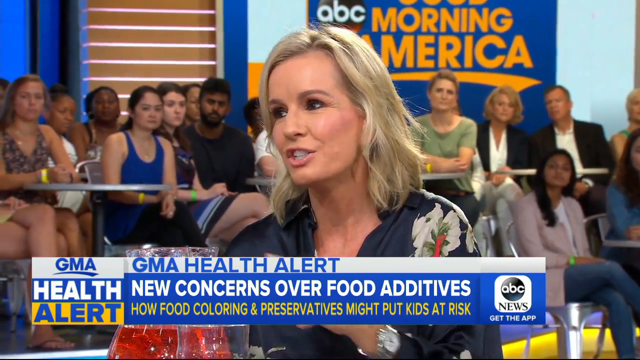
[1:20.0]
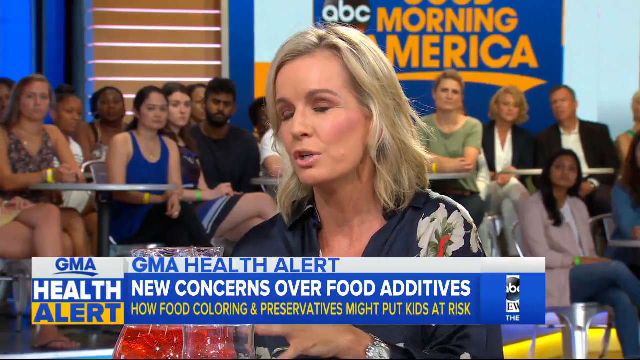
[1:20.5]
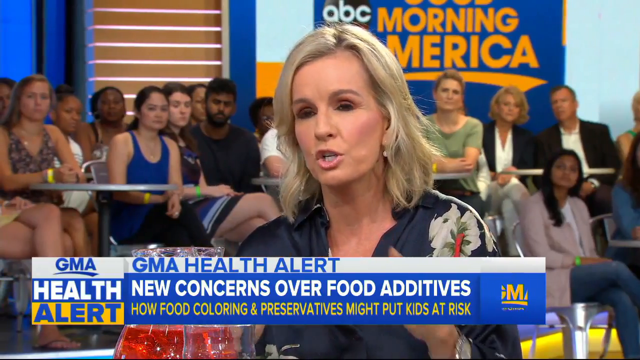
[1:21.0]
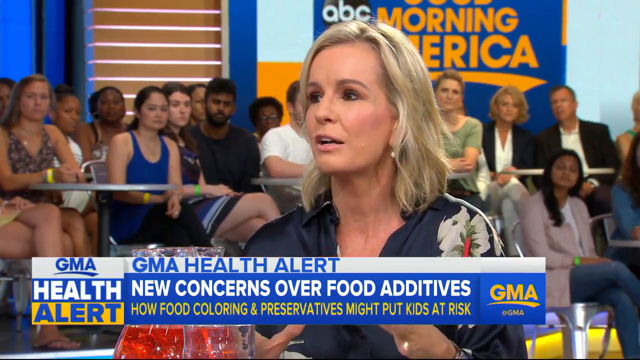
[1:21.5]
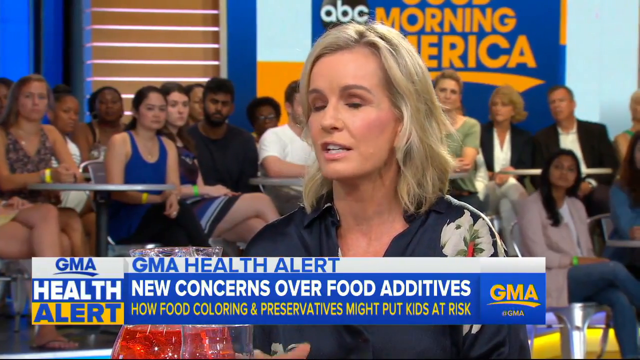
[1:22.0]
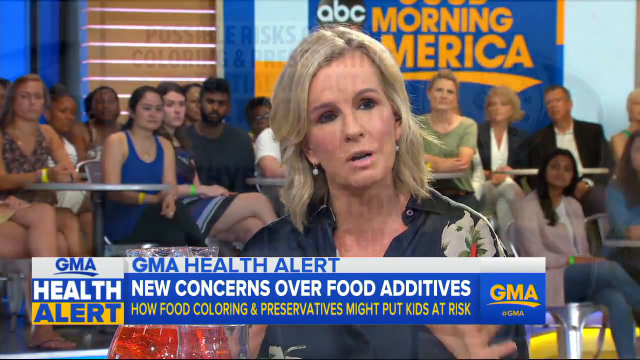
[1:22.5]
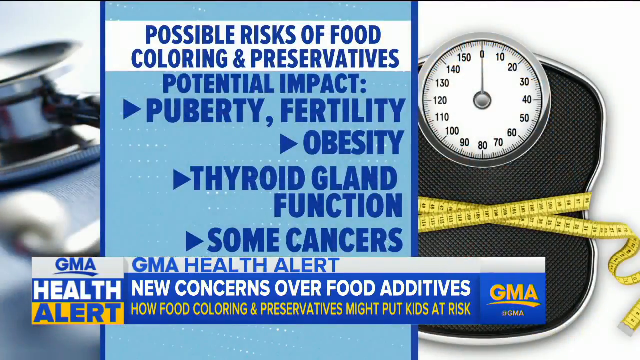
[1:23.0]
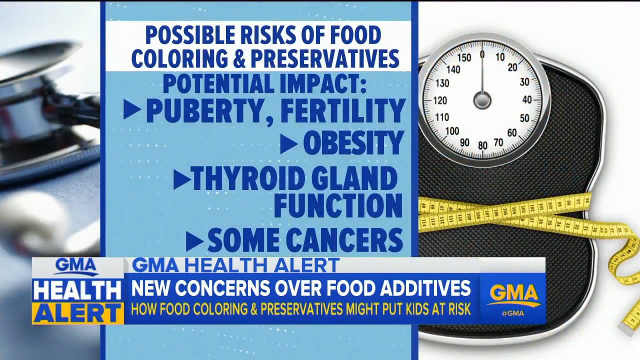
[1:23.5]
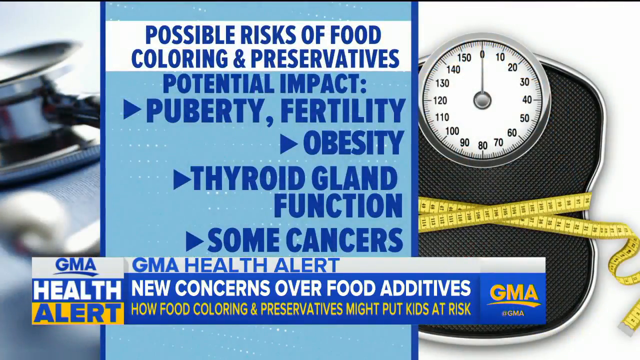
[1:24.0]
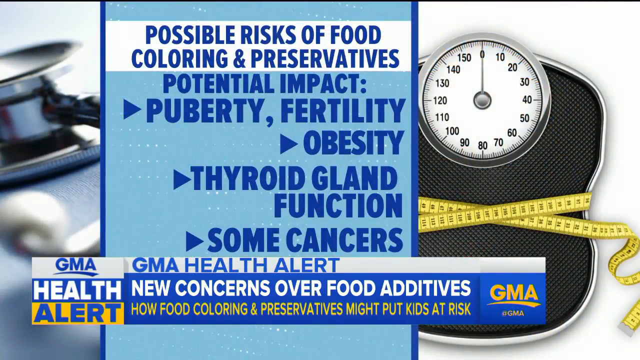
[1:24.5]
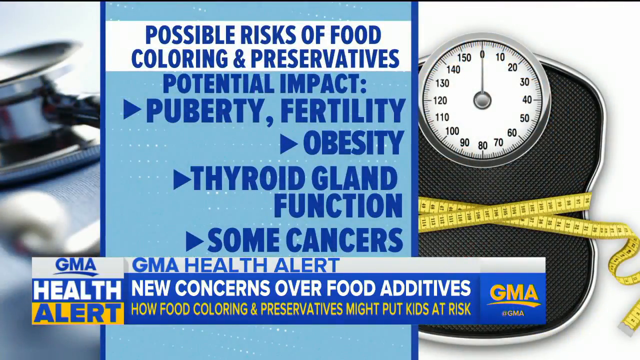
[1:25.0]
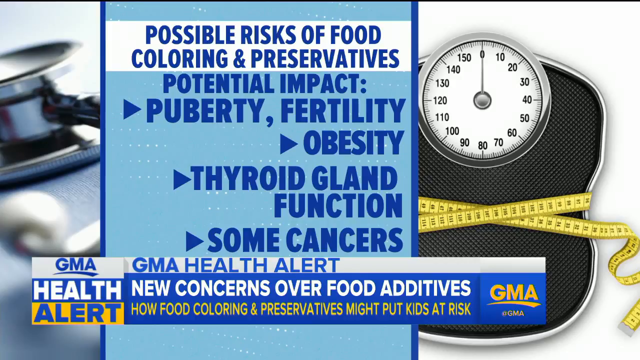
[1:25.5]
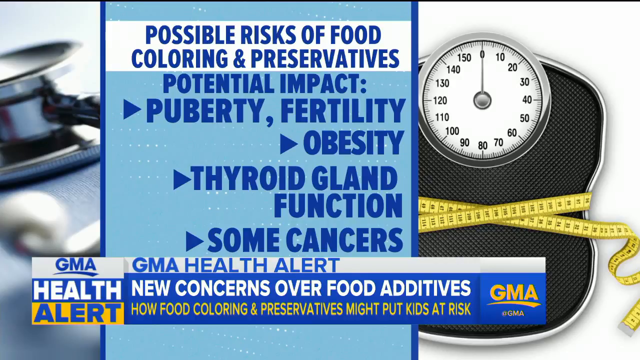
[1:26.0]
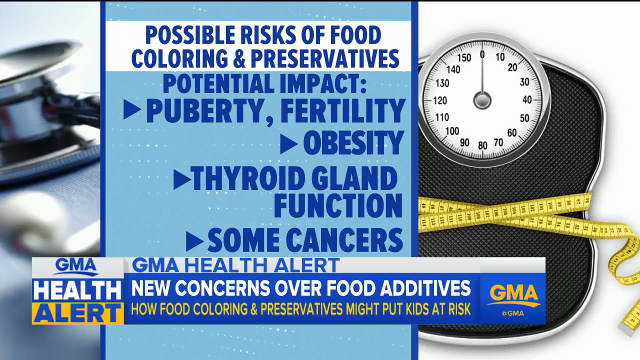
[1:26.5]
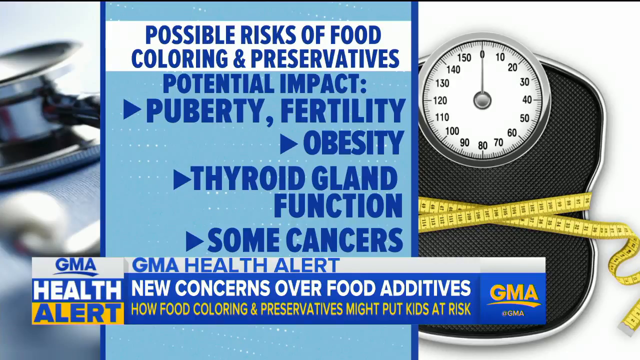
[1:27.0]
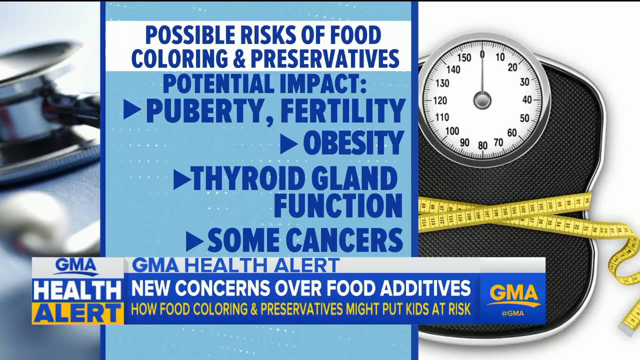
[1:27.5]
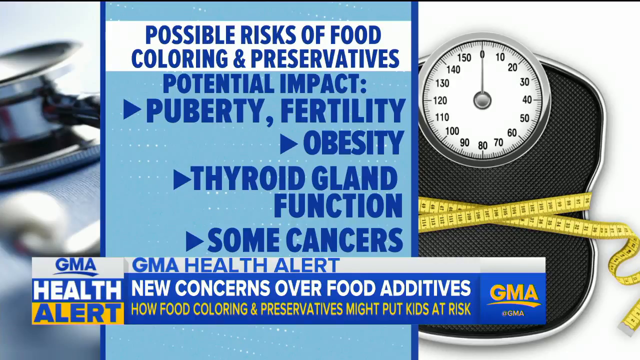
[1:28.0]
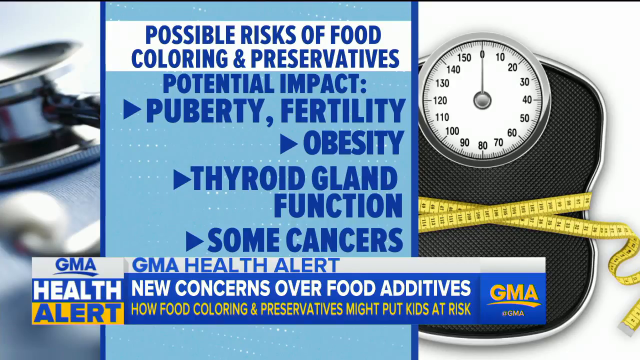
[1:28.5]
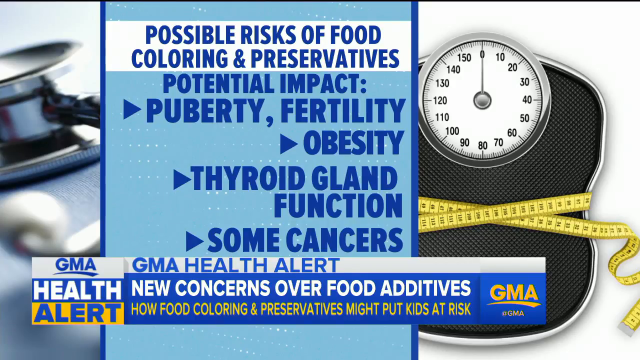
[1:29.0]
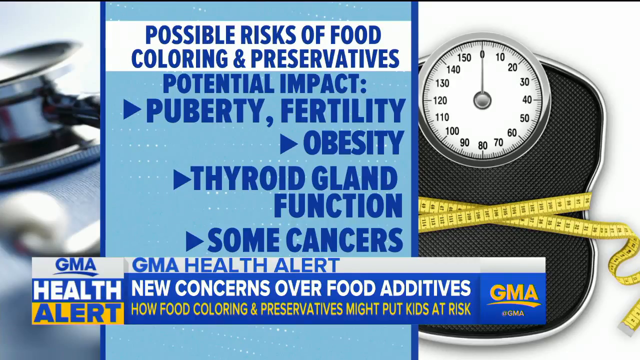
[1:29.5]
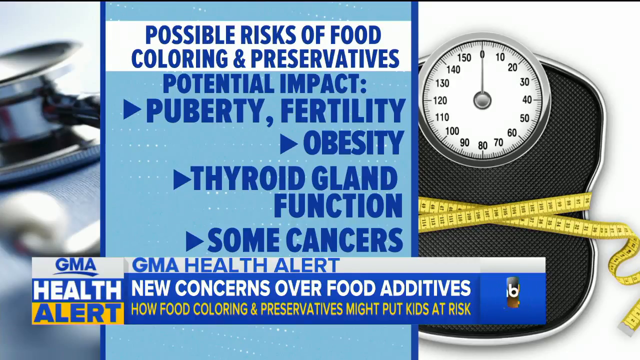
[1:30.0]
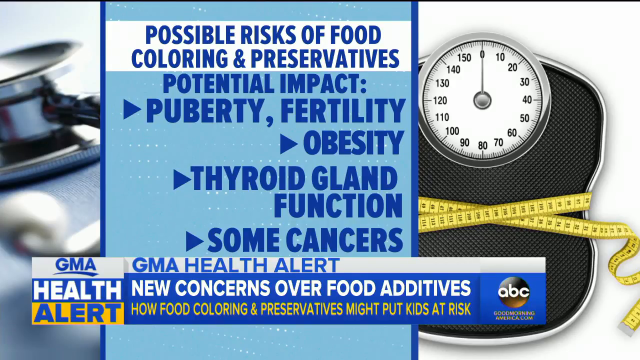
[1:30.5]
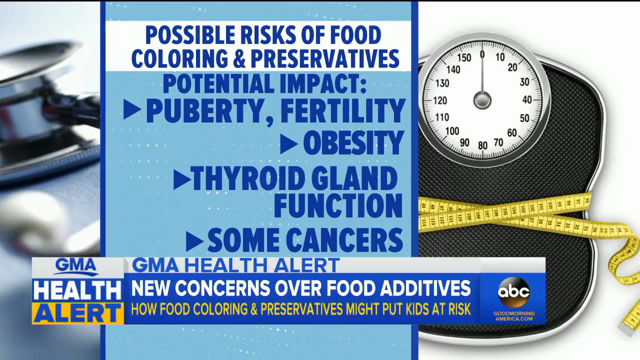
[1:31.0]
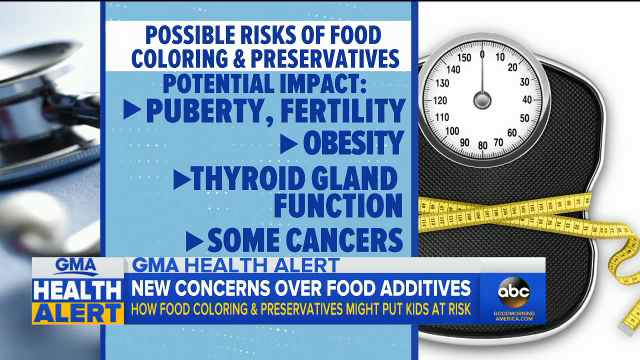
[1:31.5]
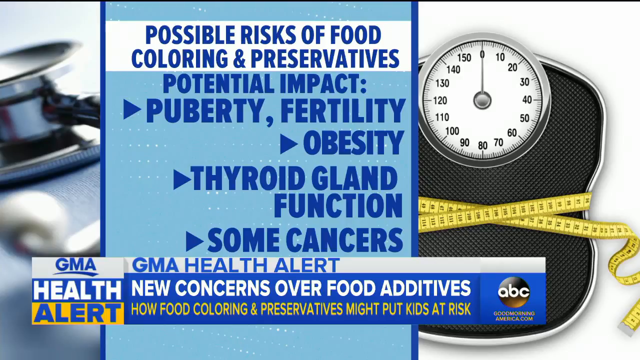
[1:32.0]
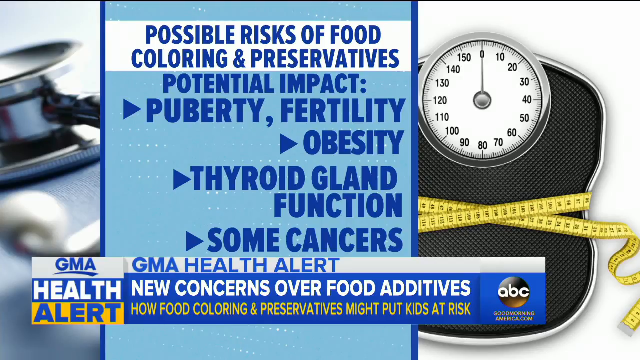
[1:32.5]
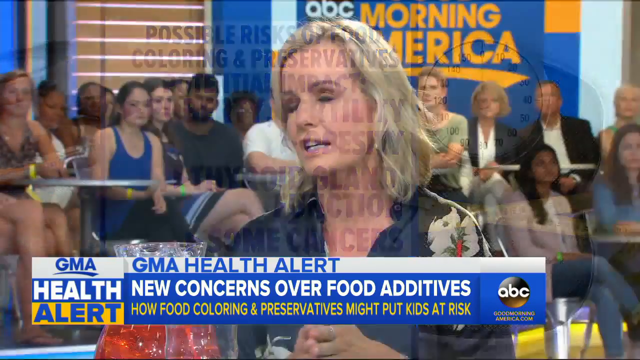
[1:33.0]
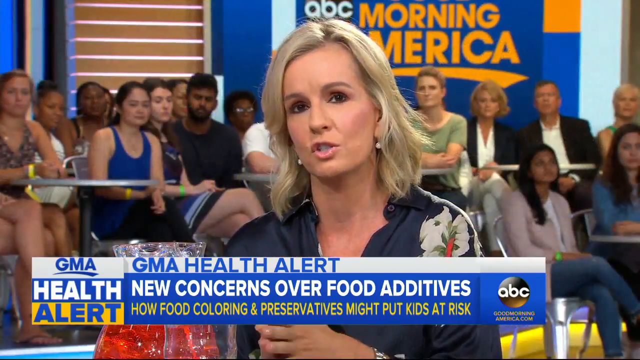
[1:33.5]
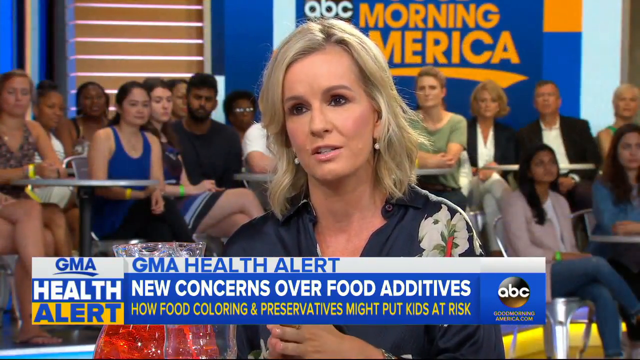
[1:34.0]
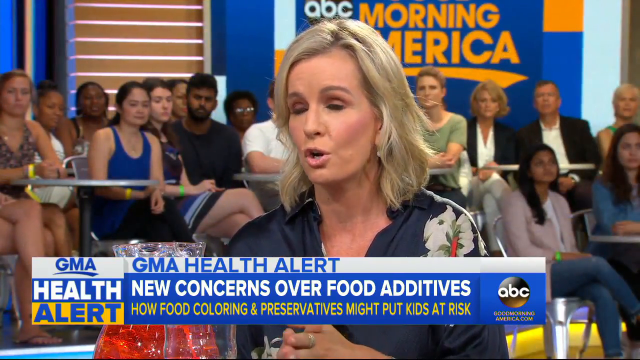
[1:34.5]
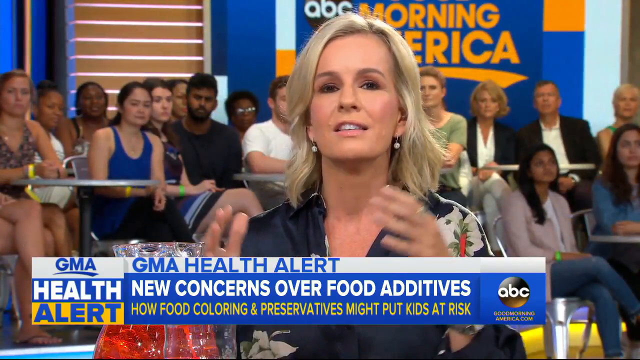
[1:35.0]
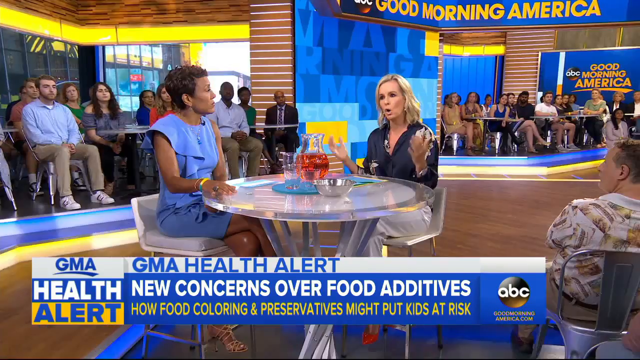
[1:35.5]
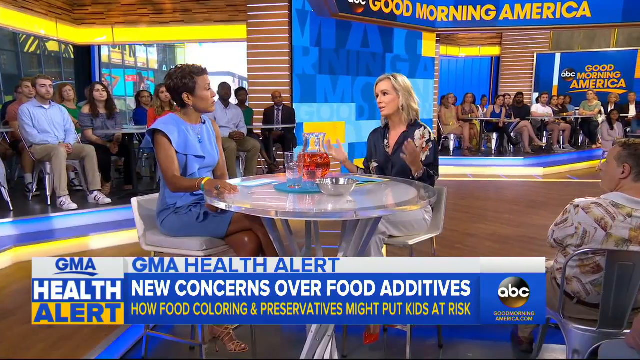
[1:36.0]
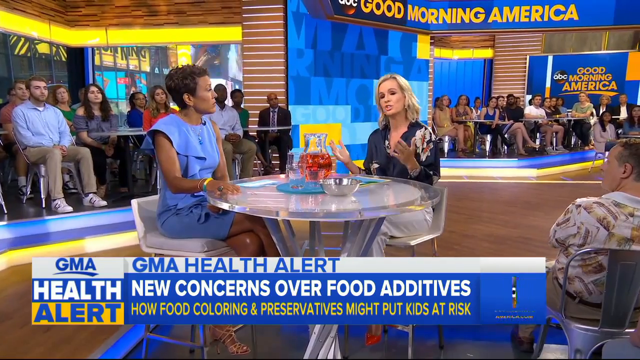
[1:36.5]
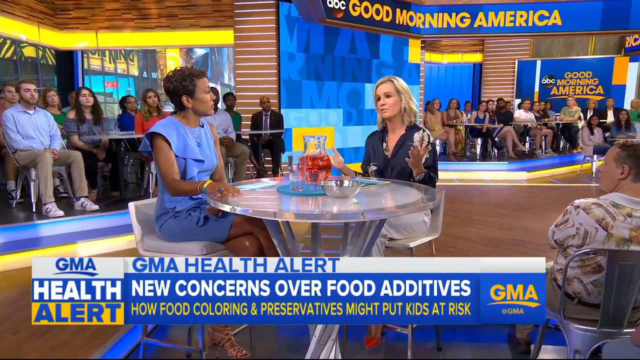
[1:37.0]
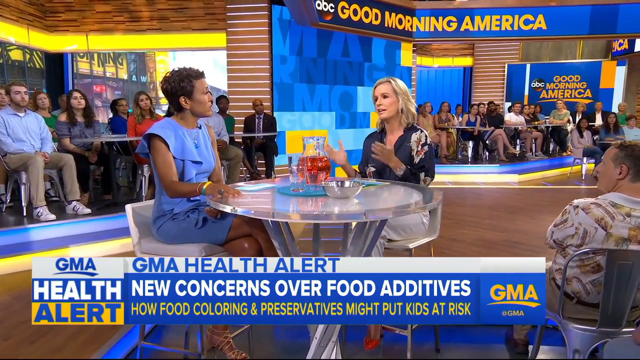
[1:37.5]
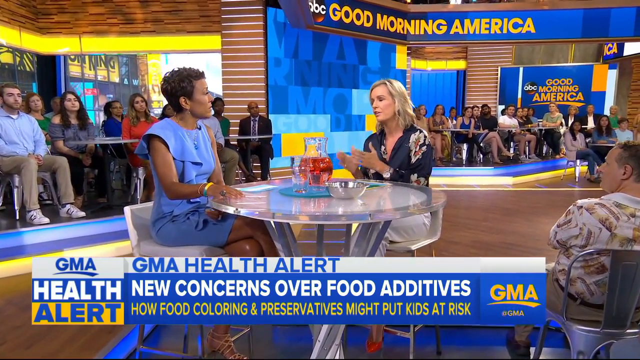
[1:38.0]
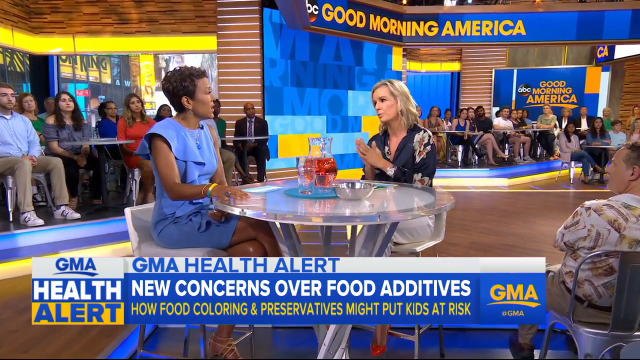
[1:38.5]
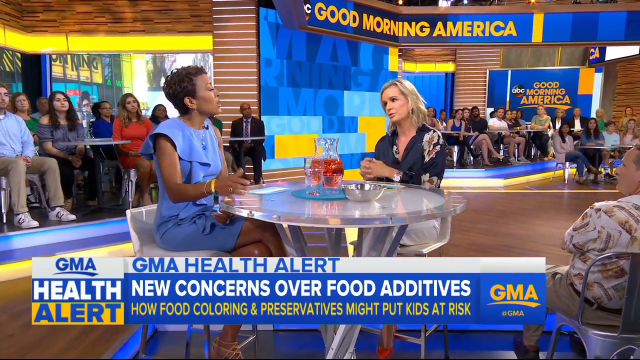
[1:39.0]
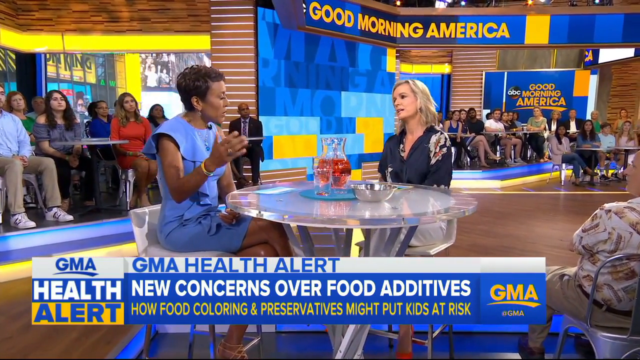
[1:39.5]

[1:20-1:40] In the studio, Dr Jennifer Ashton is speaking. The video cuts to a graphic. On the right-hand side is an analogue weighing scale with the numbers 1 to 159 on its circular dial and a yellow tape measure wrapped around the outside; the scale is black on the section you stand on and white on the rest. On the left-hand side is a blurry image that possibly shows a stethoscope, though it is hard to tell. In the middle is a block of blue with text reading "possible risks of food colouring and preservatives, potential impact, puberty, fertility, obesity, thyroid gland function, some cancers." The screen stays on this for a while, then cuts back to the studio, where Dr Jennifer Ashton is still talking and the other woman appears to be asking questions.